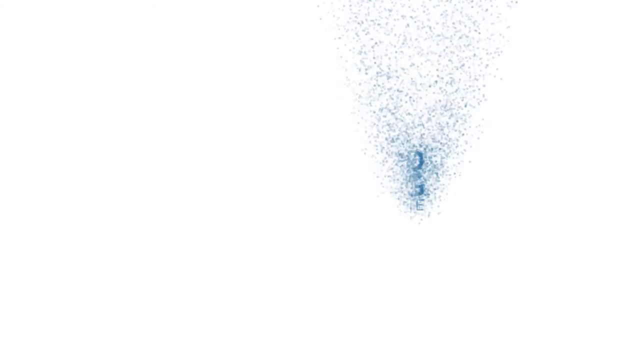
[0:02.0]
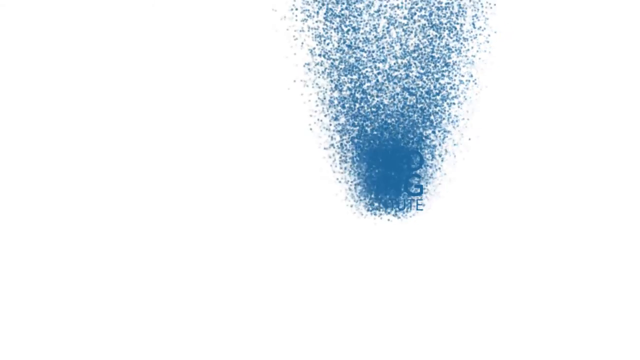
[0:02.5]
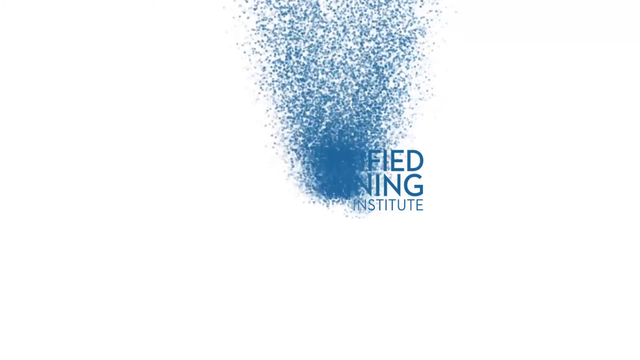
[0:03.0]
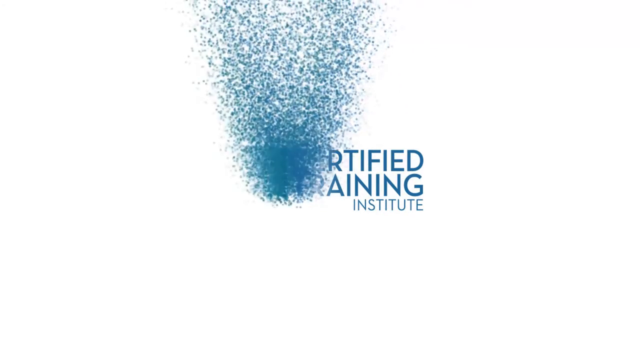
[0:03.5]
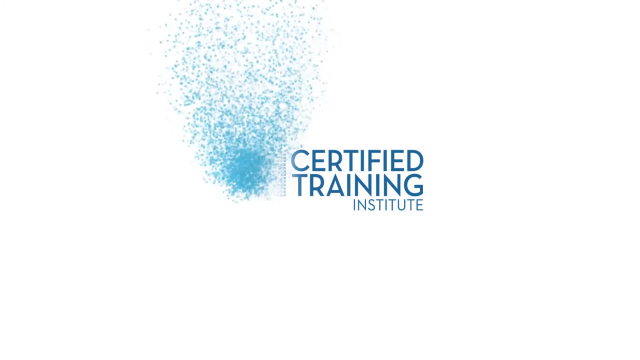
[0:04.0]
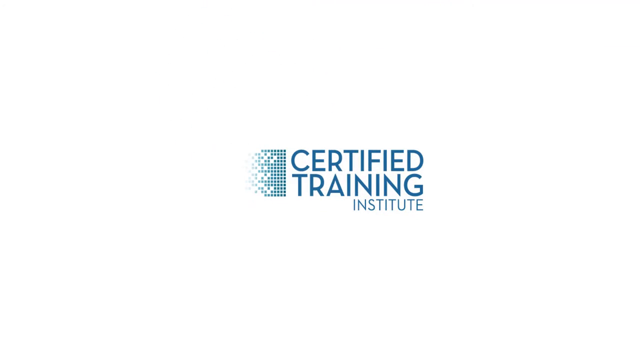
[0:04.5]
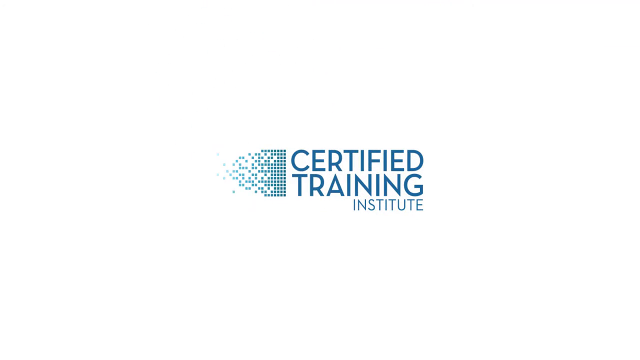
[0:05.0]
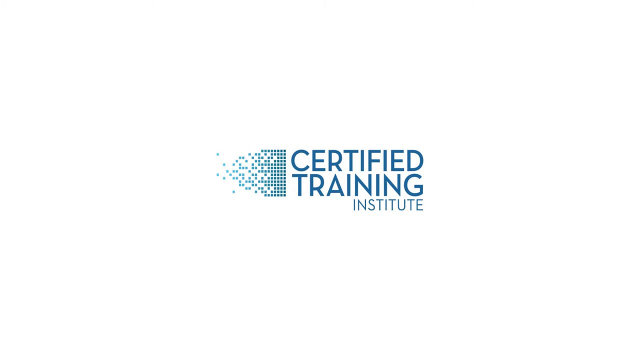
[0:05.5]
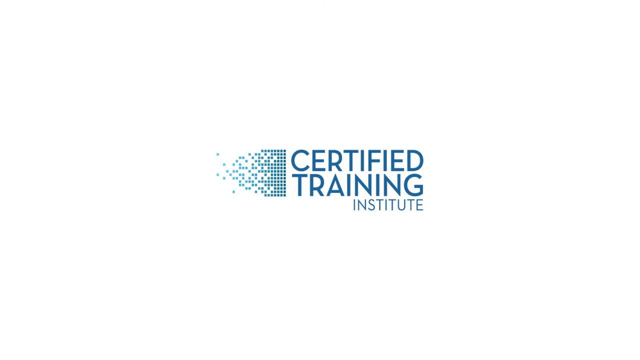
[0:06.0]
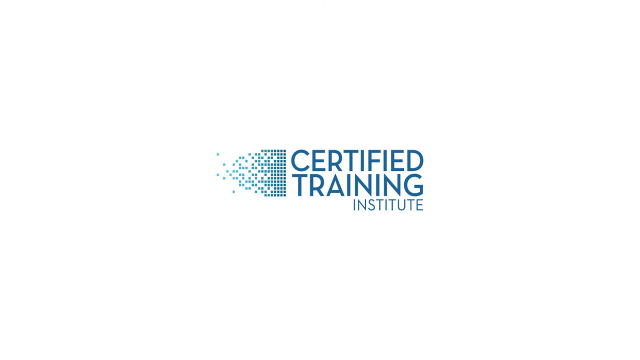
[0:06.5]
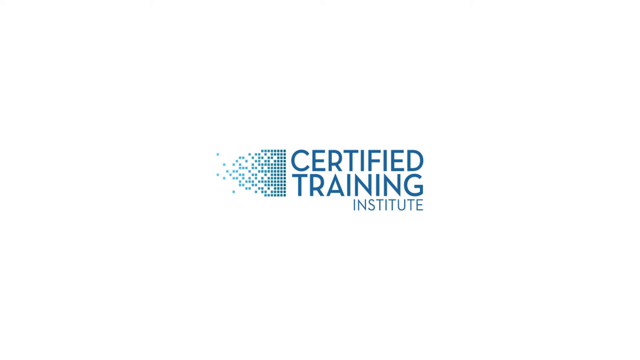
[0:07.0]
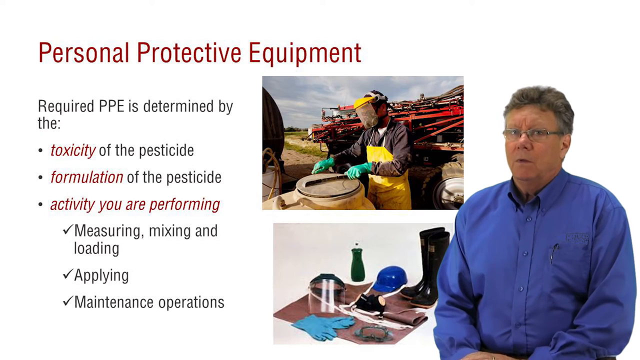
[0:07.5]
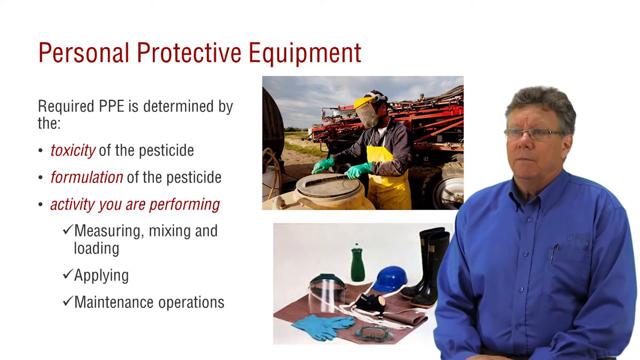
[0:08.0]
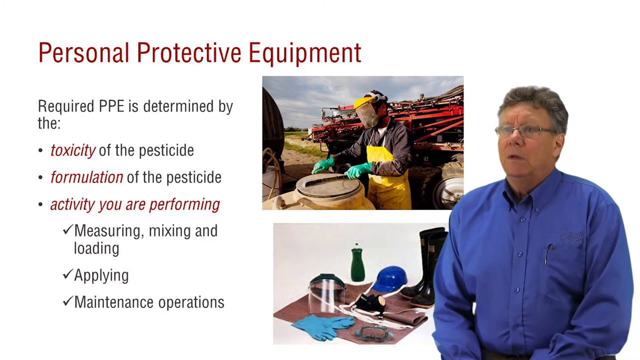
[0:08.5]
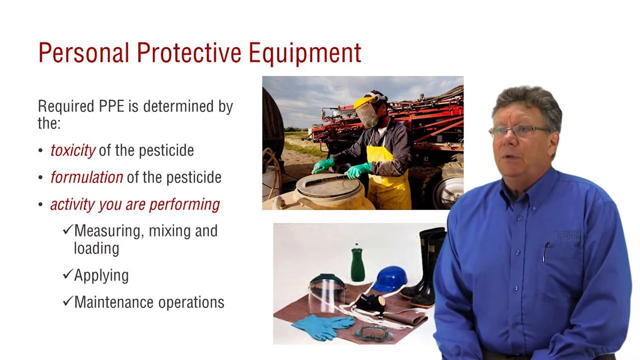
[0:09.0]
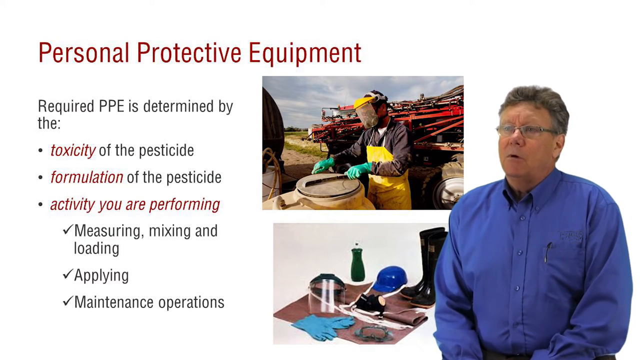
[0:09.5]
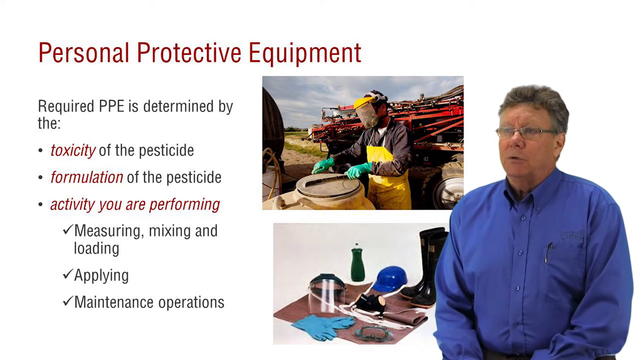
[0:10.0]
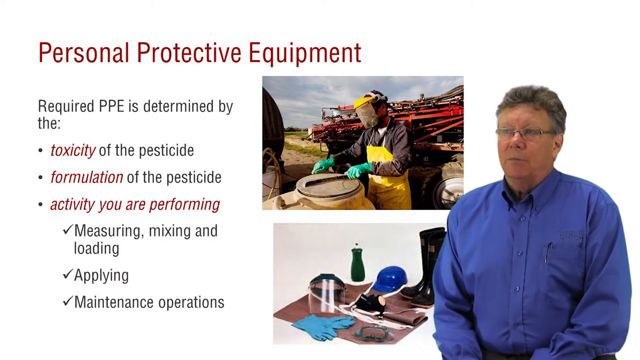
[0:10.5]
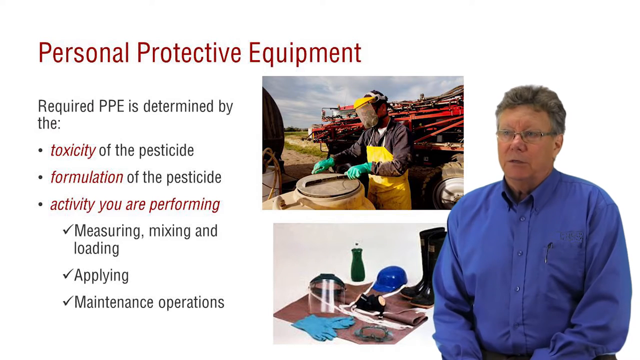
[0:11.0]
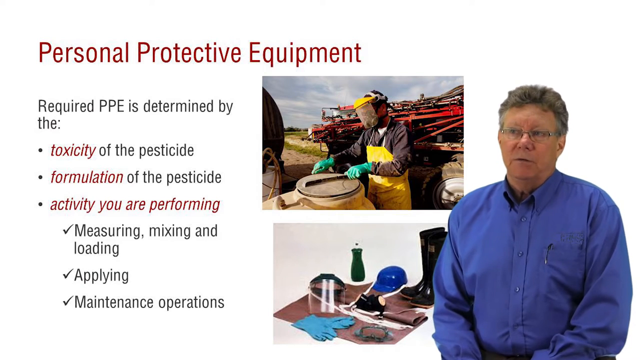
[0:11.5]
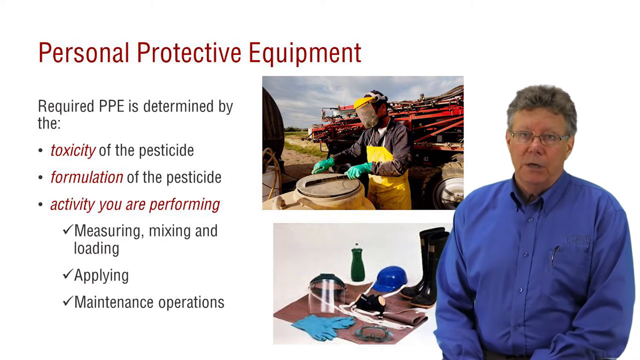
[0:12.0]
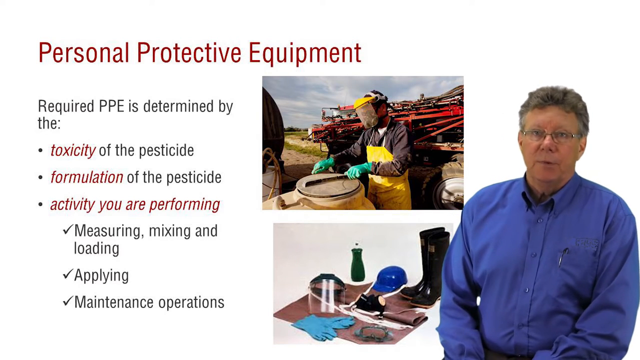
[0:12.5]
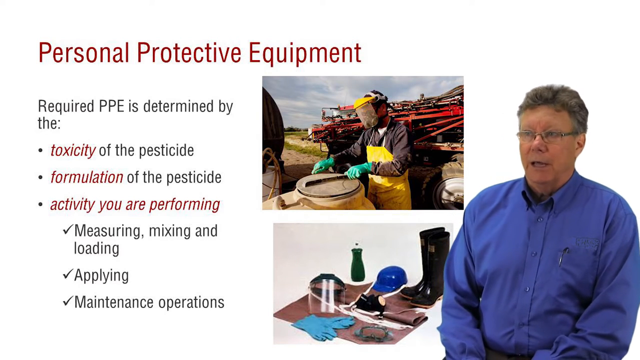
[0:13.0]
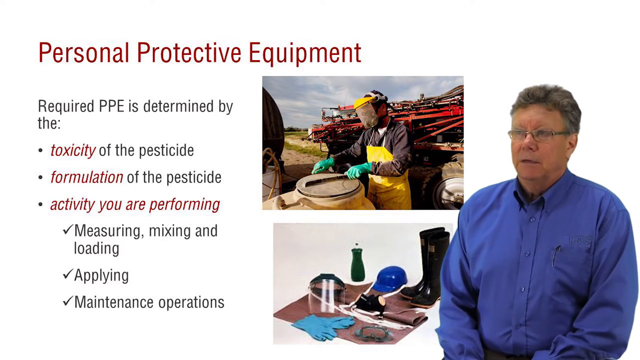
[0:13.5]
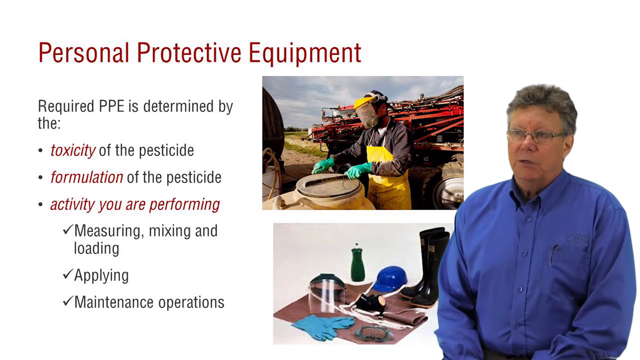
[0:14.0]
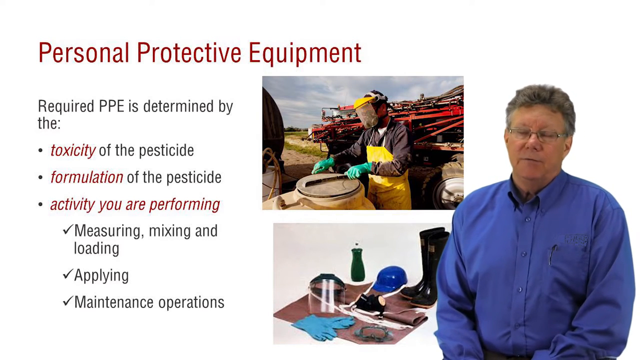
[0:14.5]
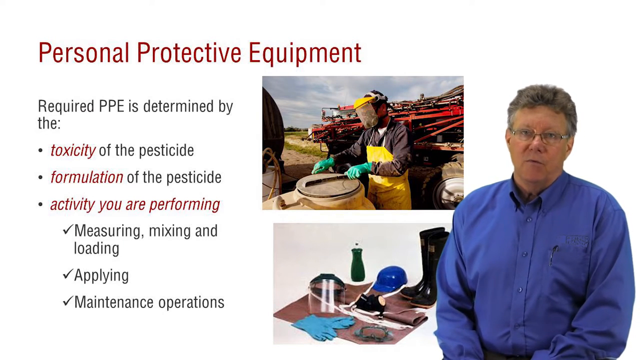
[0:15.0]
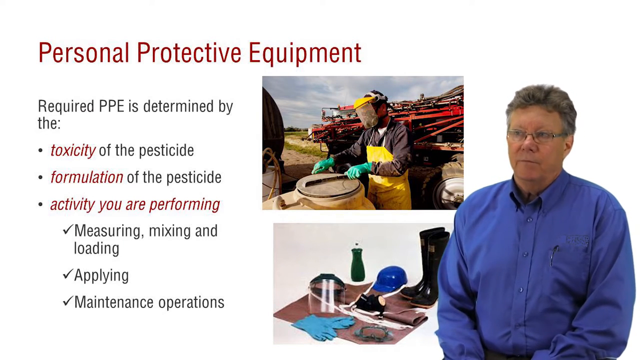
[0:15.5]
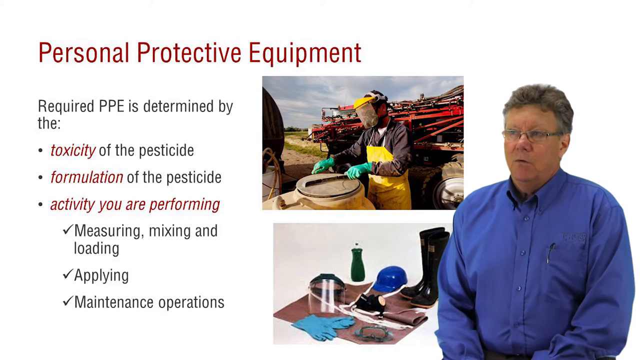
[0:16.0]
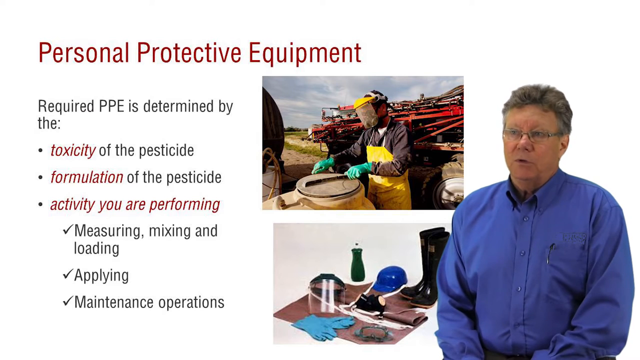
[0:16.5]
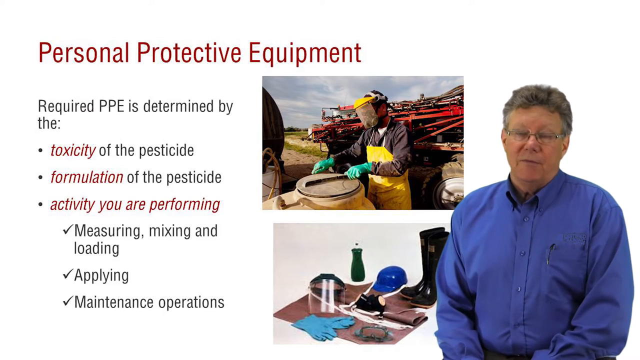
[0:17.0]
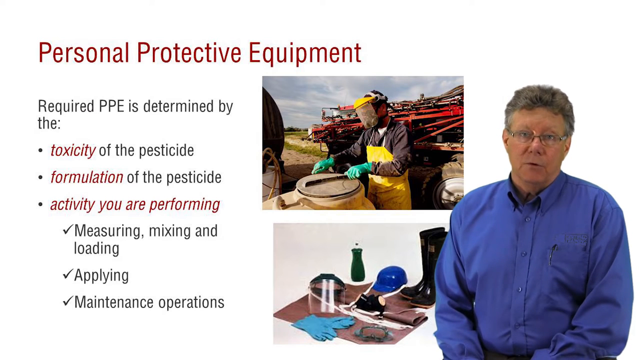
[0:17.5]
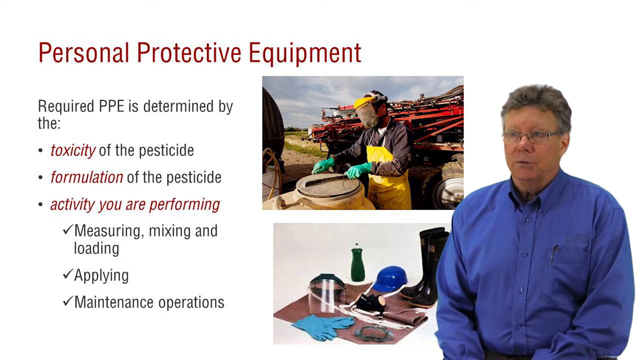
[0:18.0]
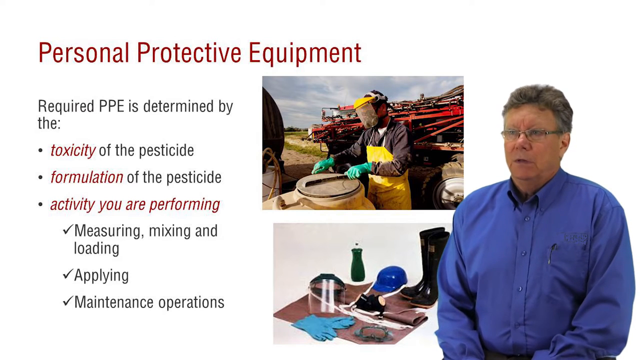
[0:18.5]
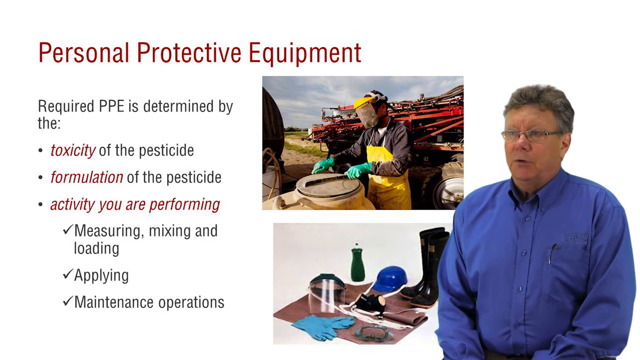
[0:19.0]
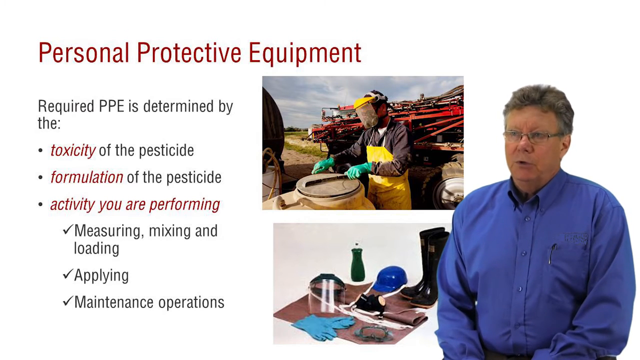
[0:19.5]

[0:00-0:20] The video opens on a white screen, and then a bunch of little dots appear along with the name "certified training institute." A man in a long-sleeve blue button-down shirt and glasses appears. Text reads "personal protective equipment" and "required PPE is determined by the toxicity of the pesticide, formulation of the pesticide, activity you are performing, measuring, mixing, and loading, applying, maintenance operations." The man talks and nods his head as he speaks. A picture shows a man wearing protective equipment while working: an apron, a mask and gloves.